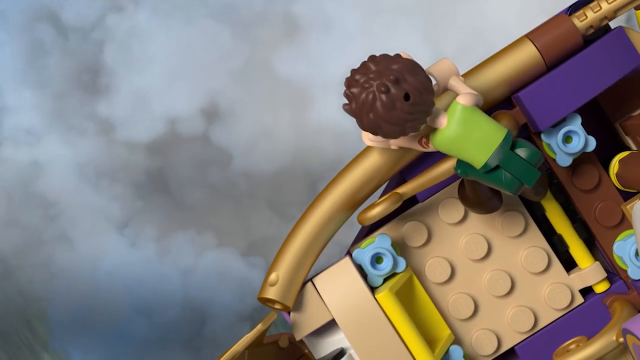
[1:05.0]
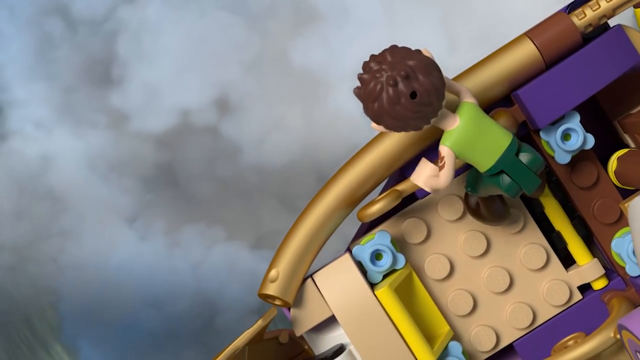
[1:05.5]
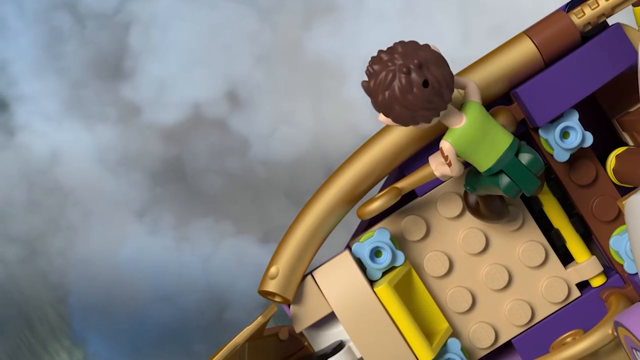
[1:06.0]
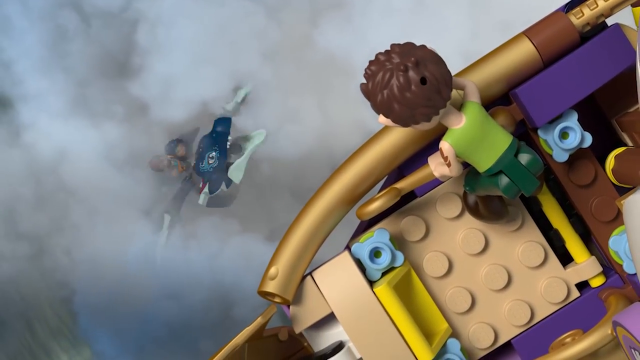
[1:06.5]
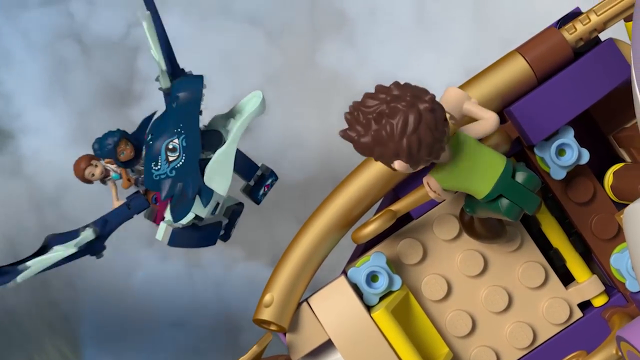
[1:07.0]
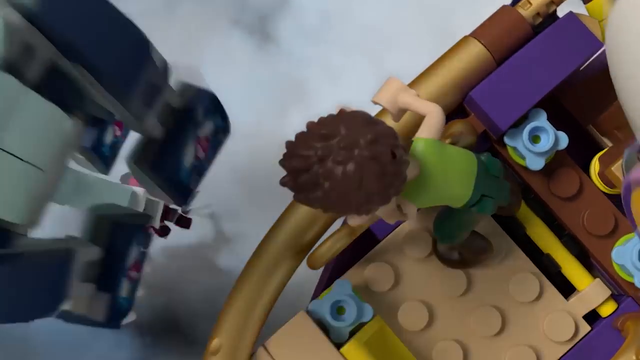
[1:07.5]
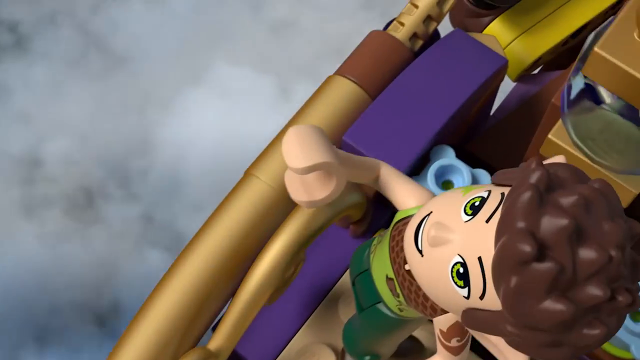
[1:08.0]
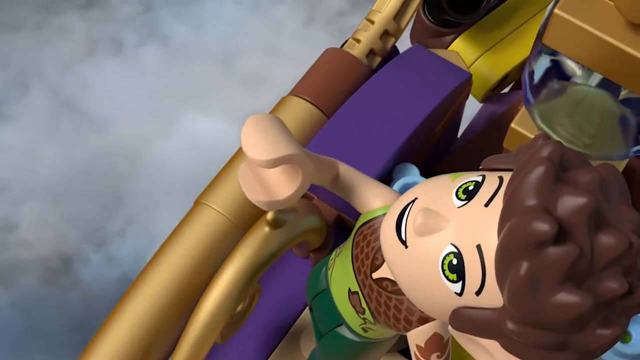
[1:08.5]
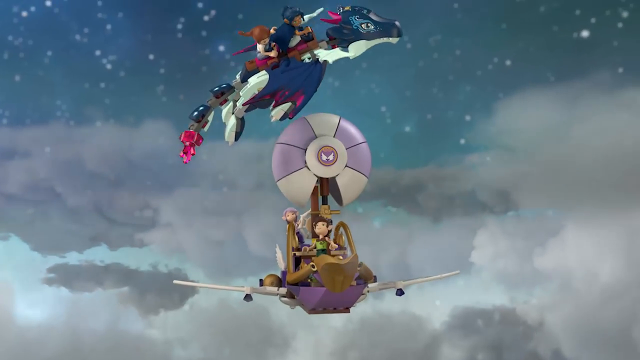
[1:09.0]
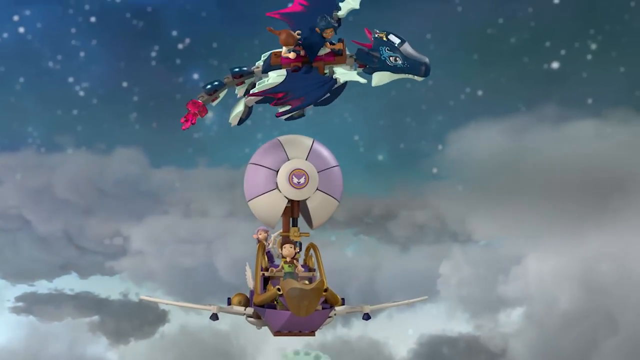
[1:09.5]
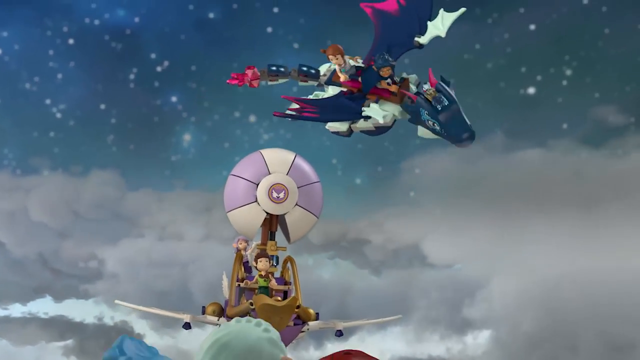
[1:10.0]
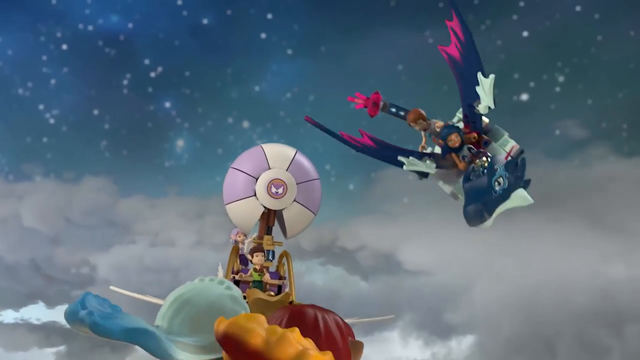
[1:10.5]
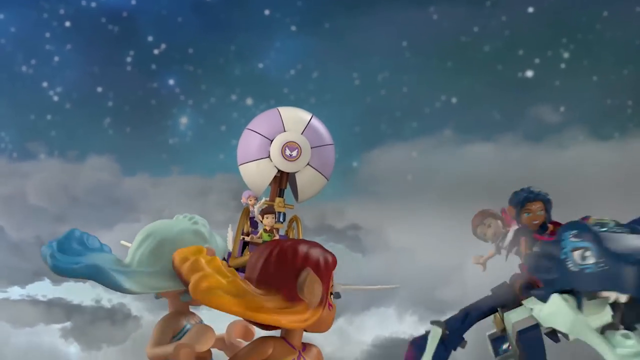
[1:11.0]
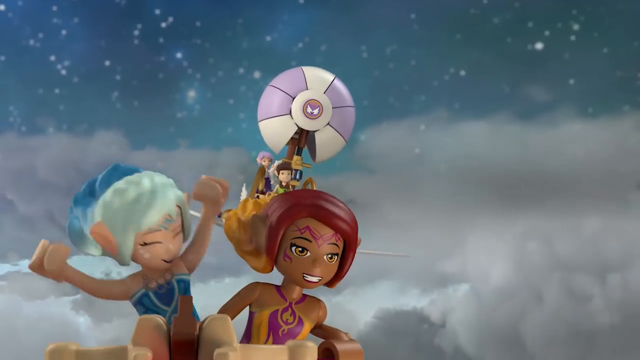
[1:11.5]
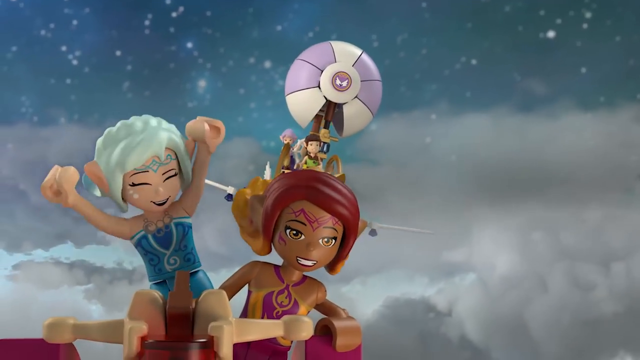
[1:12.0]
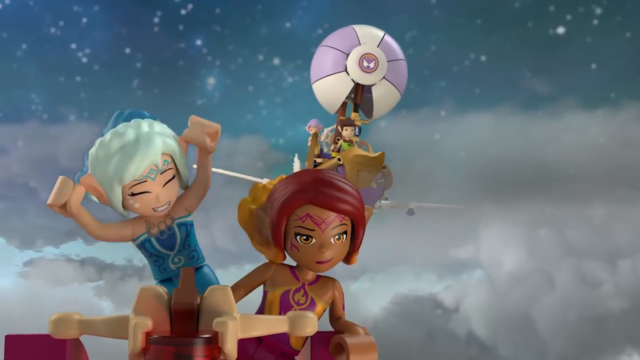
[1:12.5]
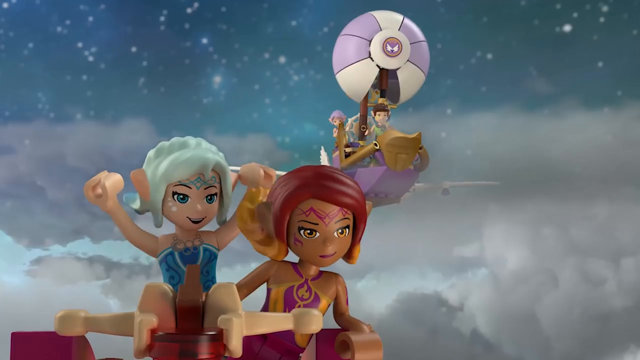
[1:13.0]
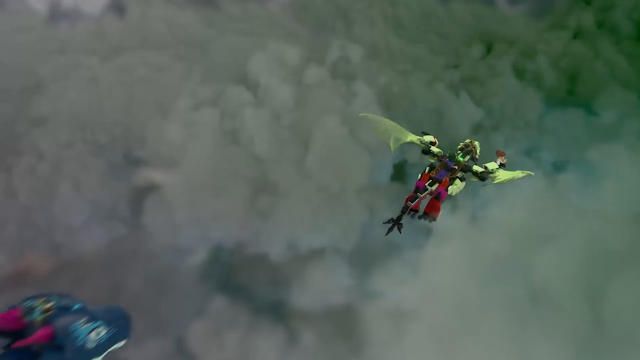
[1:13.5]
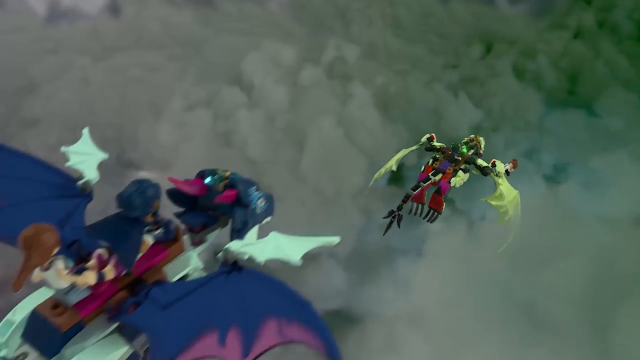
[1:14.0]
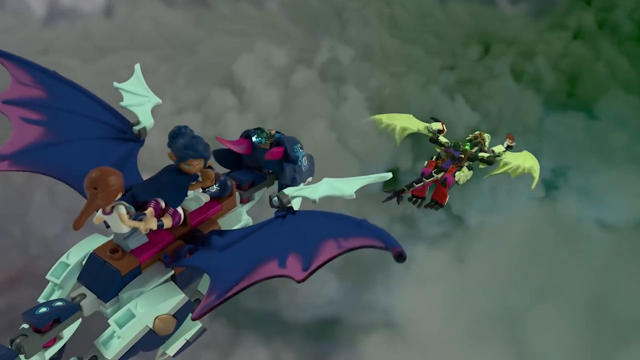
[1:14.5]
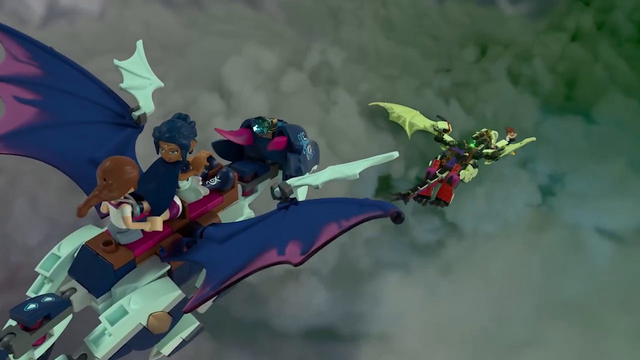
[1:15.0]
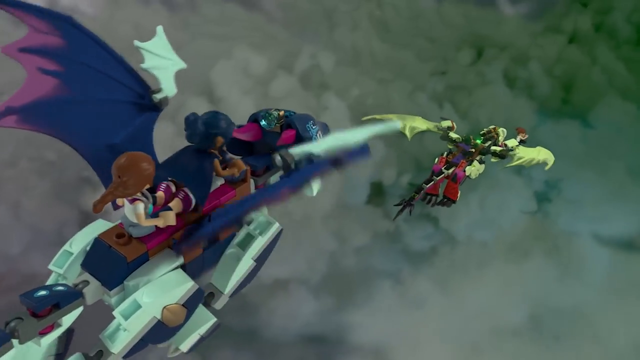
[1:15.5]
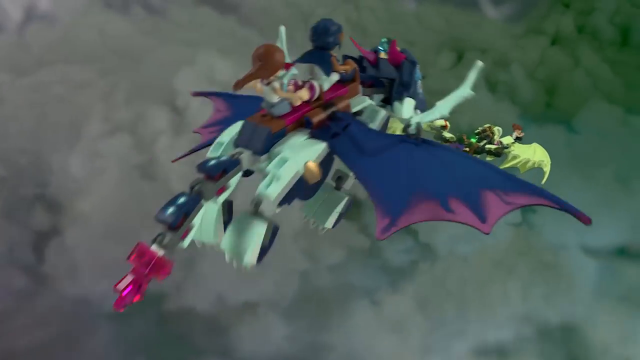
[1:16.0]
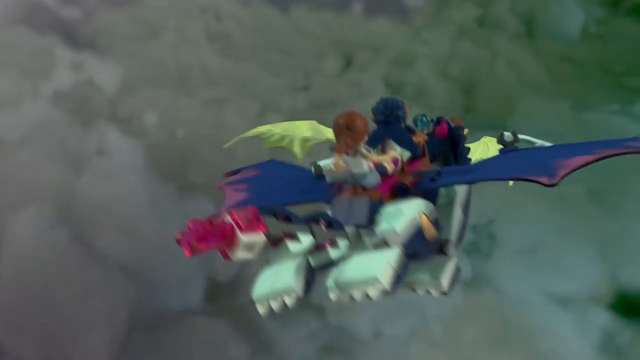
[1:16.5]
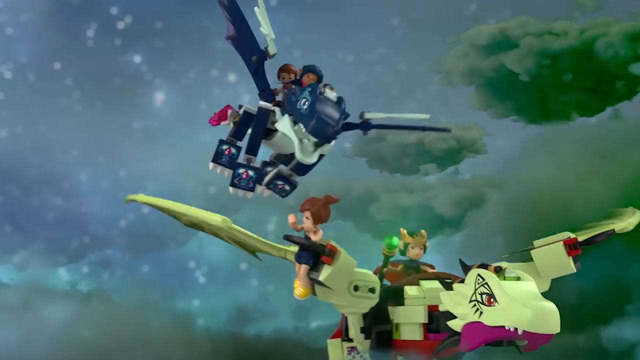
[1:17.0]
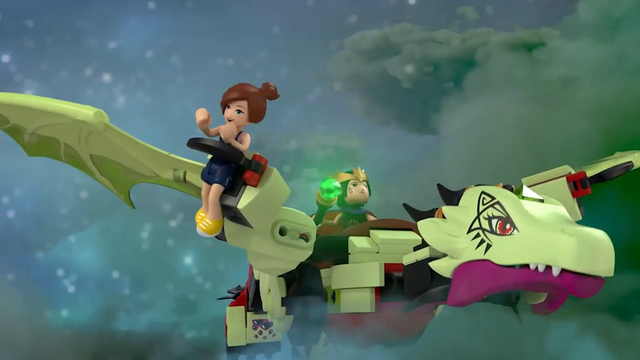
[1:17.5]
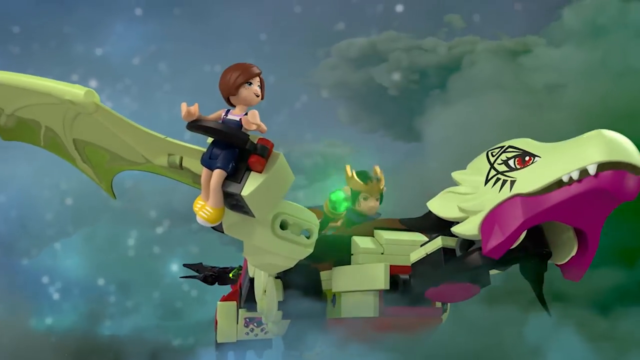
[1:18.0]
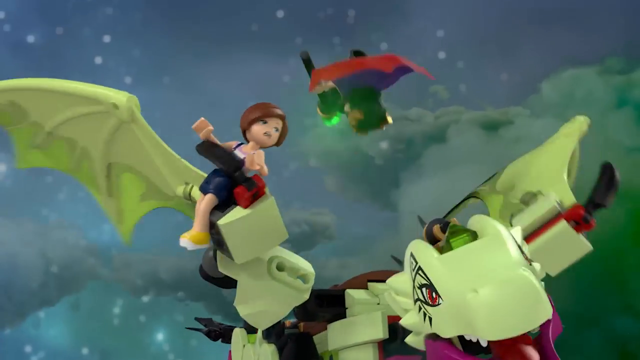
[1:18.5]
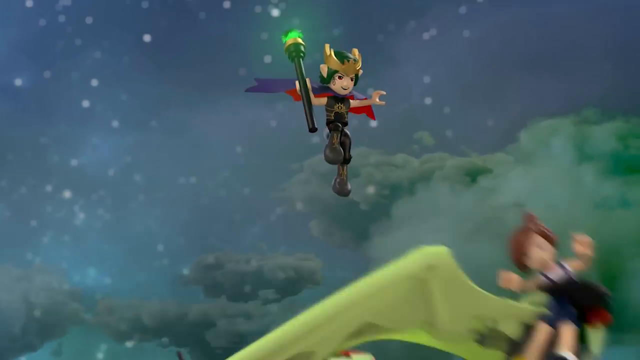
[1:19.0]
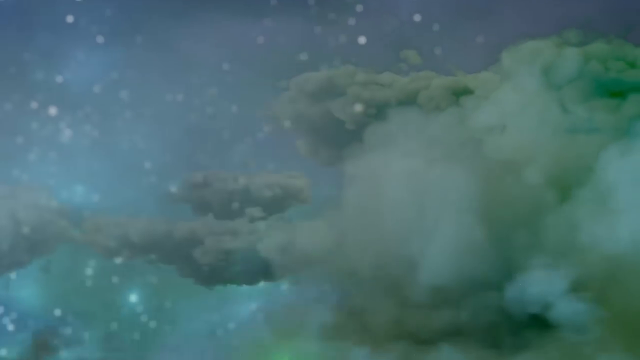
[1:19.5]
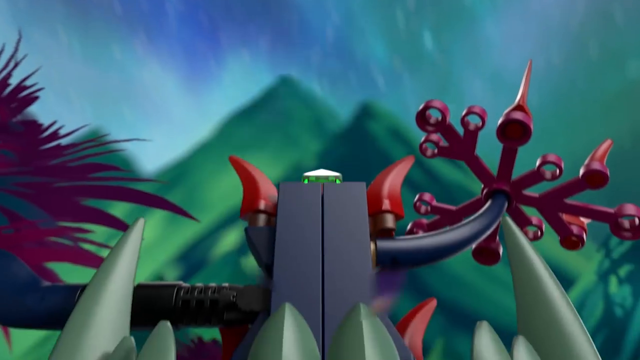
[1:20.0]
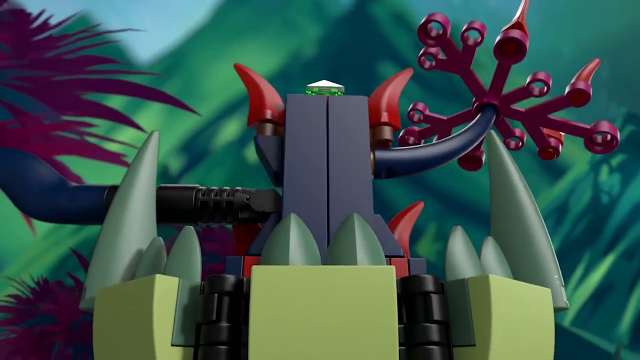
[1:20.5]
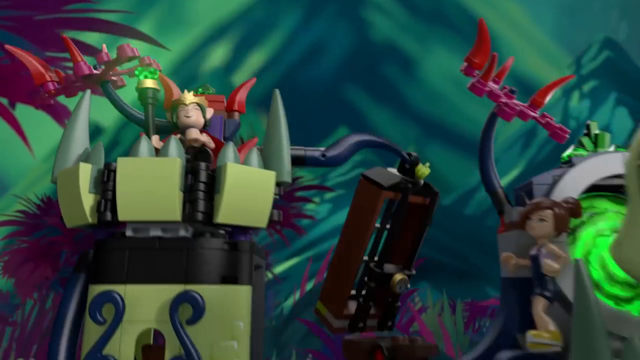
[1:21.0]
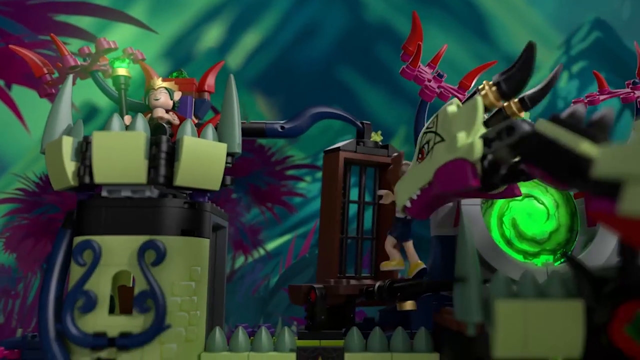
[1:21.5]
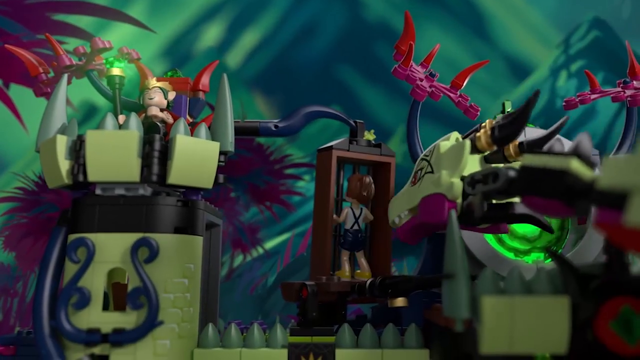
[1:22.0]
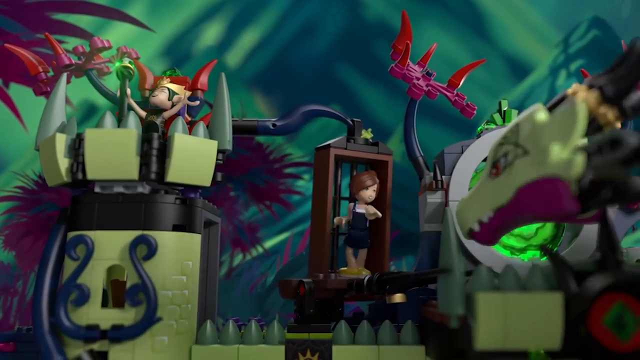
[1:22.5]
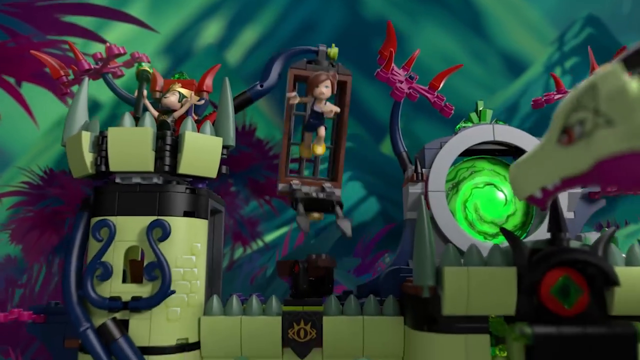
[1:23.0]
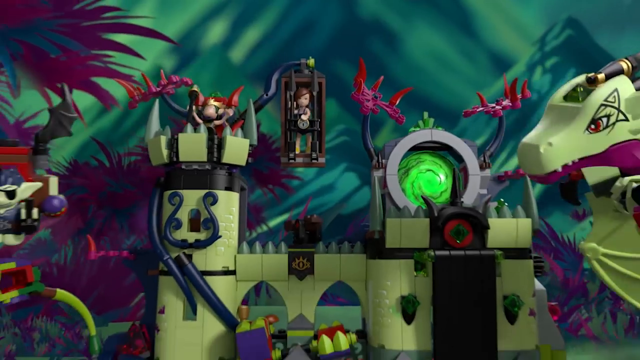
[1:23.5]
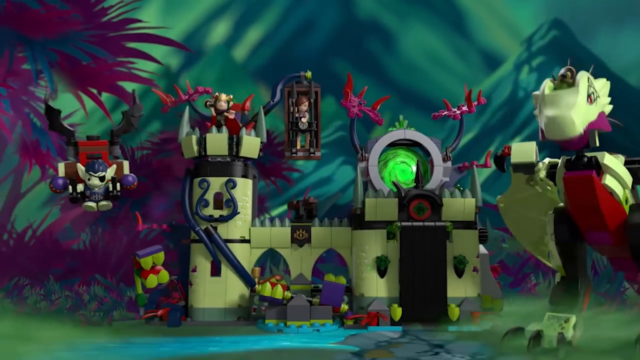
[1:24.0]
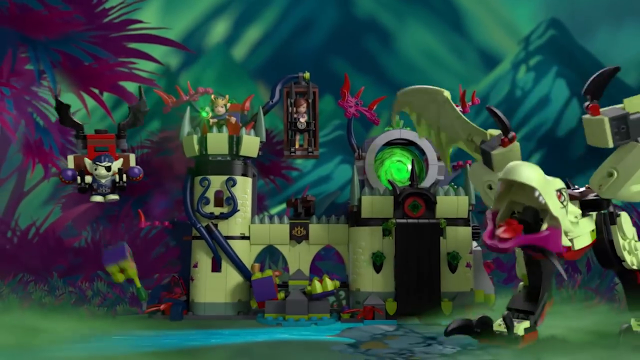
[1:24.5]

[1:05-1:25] The boy looks down at the girl who fell; only the back of his head is visible, and he is shaking his head. Suddenly a blue dragon flies up toward him, and it appears to have caught the girl who fell. A woman with dark skin and blue hair is on the blue dragon. She makes a sweeping pass toward the witch on the green dragon, but the witch dodges it, jumps off the green dragon, and lands on one of the goblin houses. The witch takes the little girl with her, puts her in a cage, and raises her arms in victory with her wand in her hand; it seems at this moment that she has won. The dragon and the goblins are also down there, all set up in front of a little castle or house structure made of Legos.